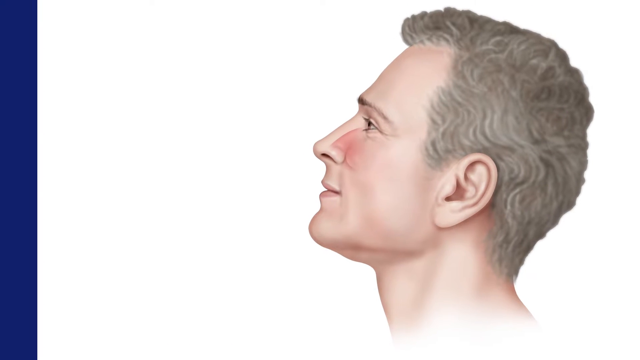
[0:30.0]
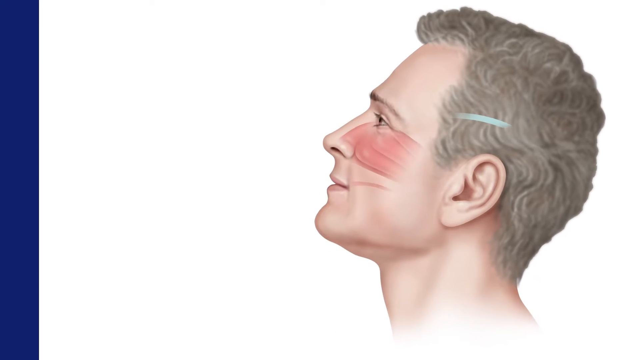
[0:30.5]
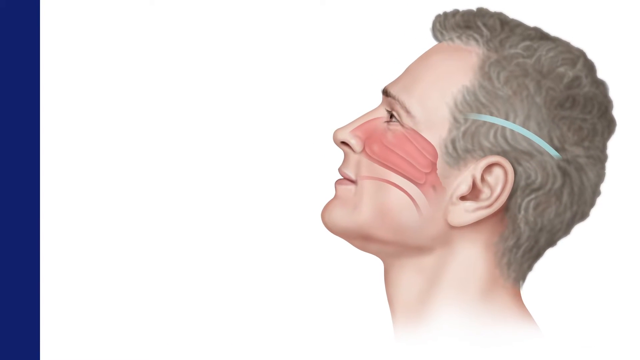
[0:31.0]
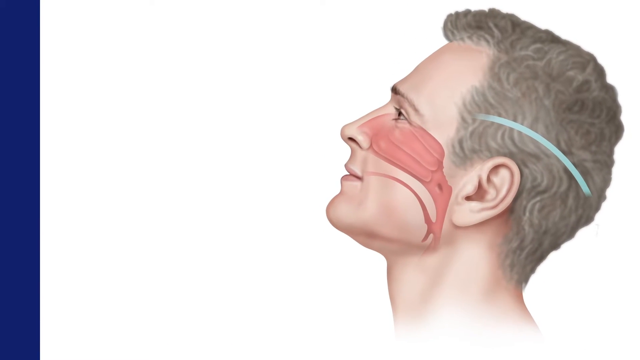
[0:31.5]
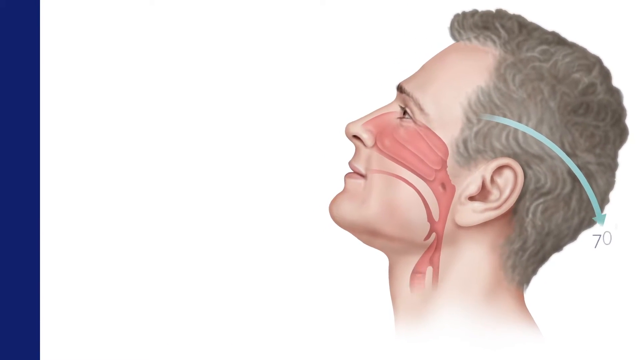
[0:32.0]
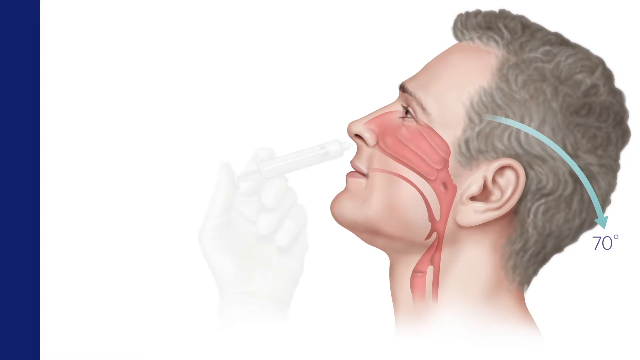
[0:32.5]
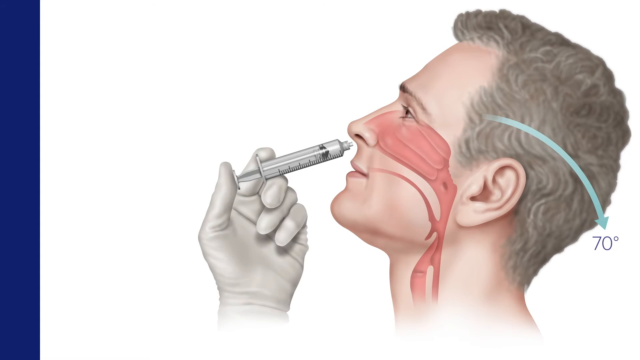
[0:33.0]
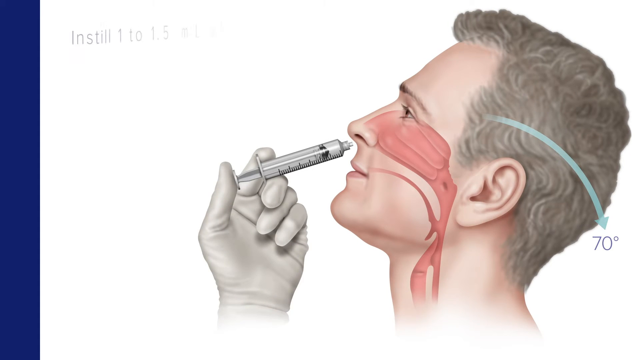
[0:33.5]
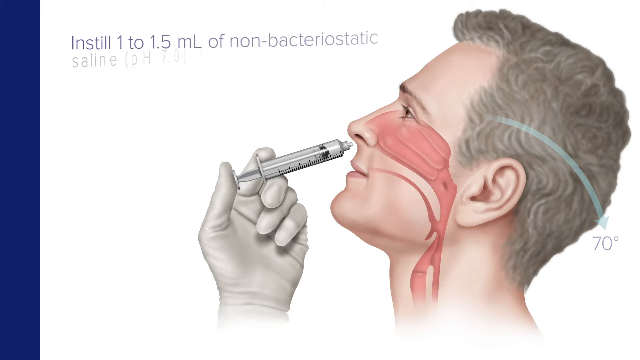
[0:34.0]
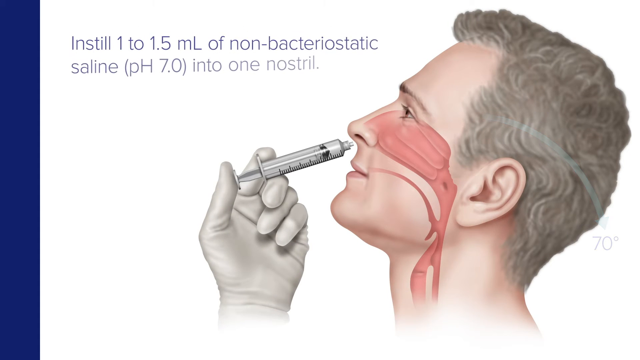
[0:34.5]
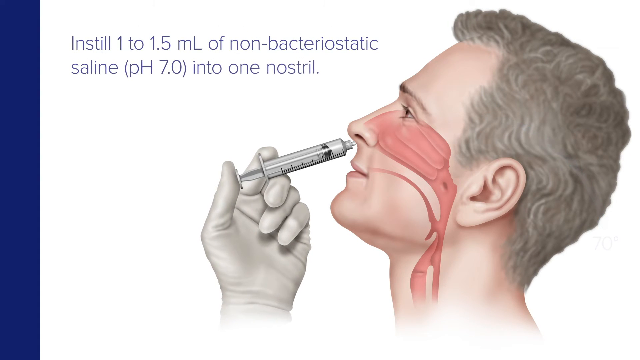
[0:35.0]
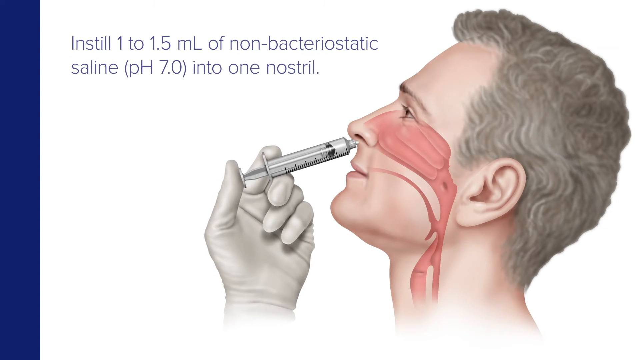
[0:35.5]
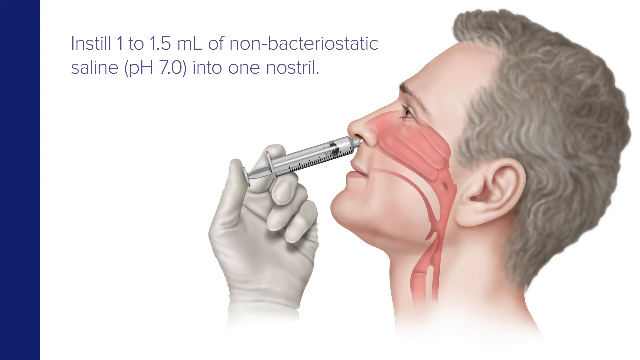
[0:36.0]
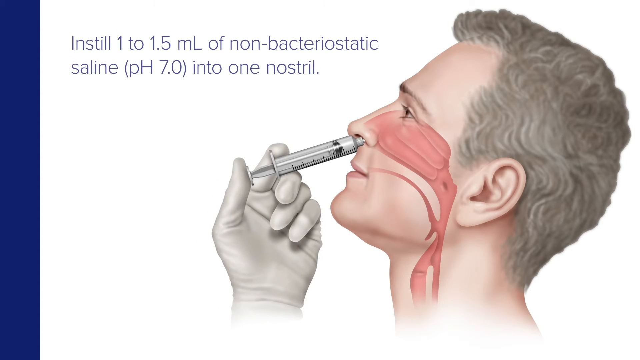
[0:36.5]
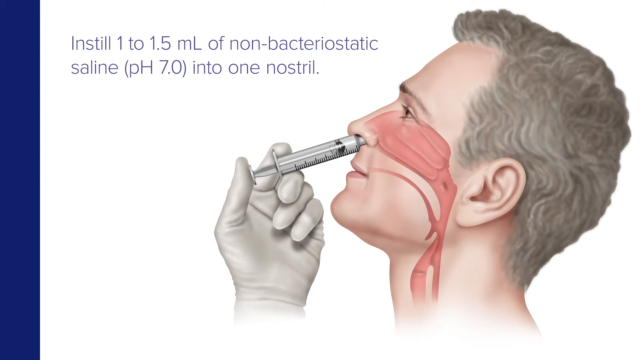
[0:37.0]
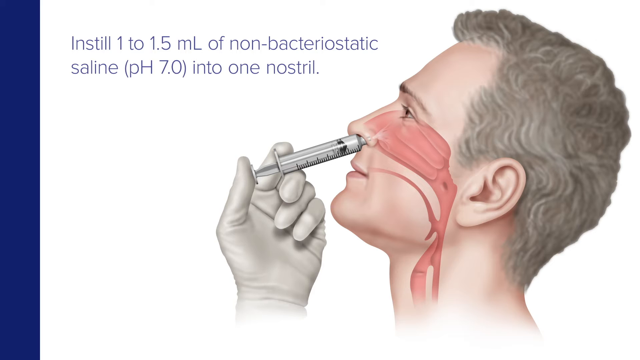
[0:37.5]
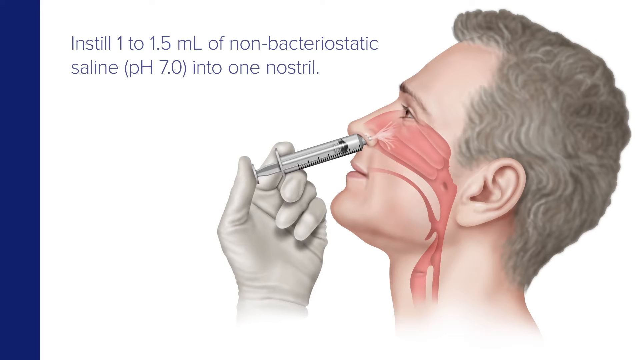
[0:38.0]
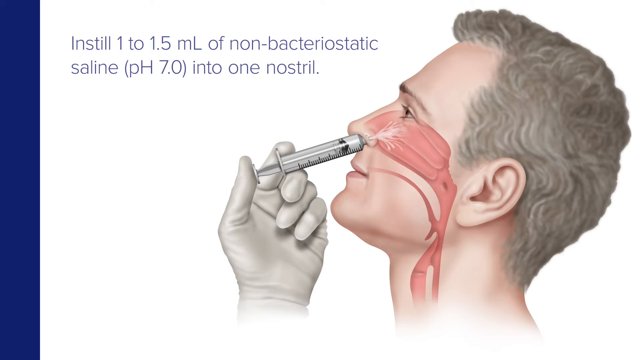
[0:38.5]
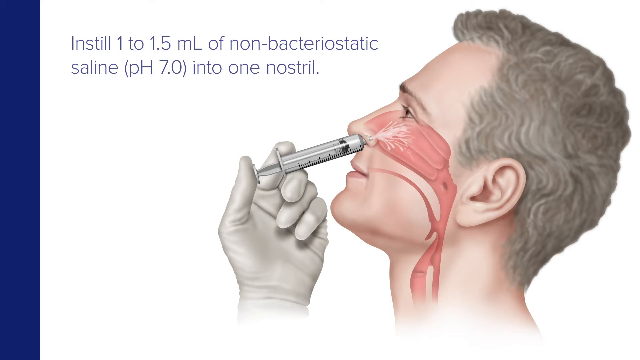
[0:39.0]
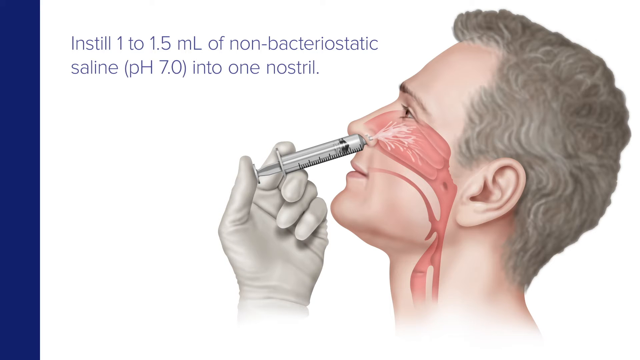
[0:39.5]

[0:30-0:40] On a white background with a very dark royal blue border on the left, an illustration of a man appears mostly on the right side of the screen. Only the left side of his head and his neck are visible. He is Caucasian, with short wavy gray hair, brown eyes and a normal weight, and his face is animated. He appears to lean his head back slightly and breathe in, and as he does a light blue stripe appears above his ear on his hair. Something that almost looks like red clay swiped across his upper cheek appears, with three fingerprints visible in it, and below it is a slightly curved line. With his head still leaning back, more structures extend from the illustrations on his head, as if starting down his neck, possibly showing his esophagus. The blue line on his head grows longer, staying curved, with an arrow at its end that ends right at the hair on the back of his head, and "70°" appears next to it. Suddenly an illustrated hand appears, putting a syringe up one of his nostrils, and words read "instill 1 to 1.5 ml of non-bacteriostatic saline (pH 7.0) into one nostril."